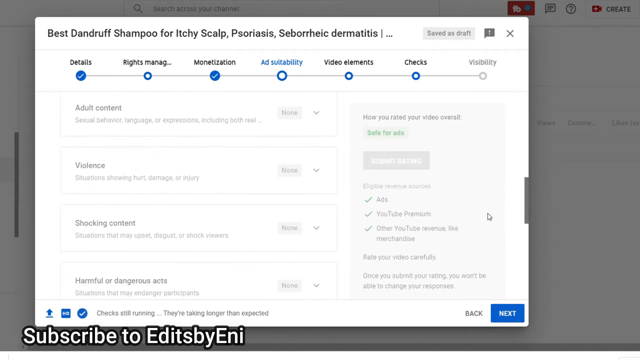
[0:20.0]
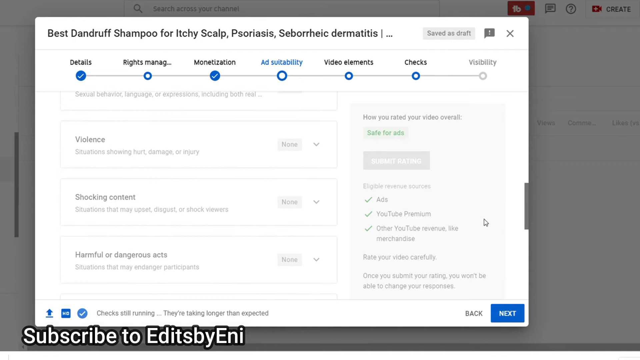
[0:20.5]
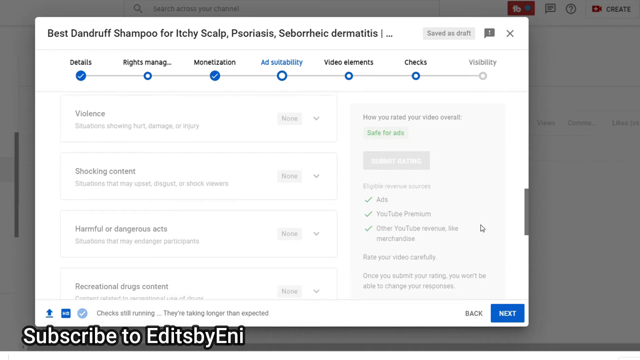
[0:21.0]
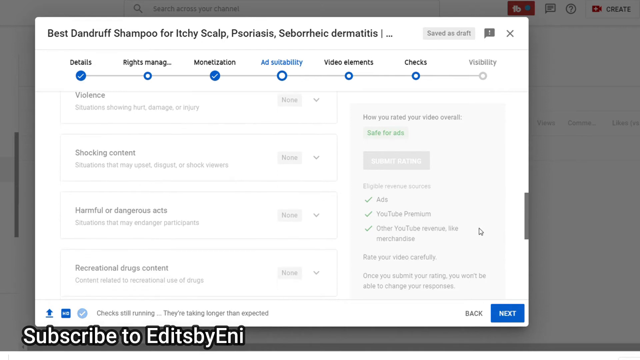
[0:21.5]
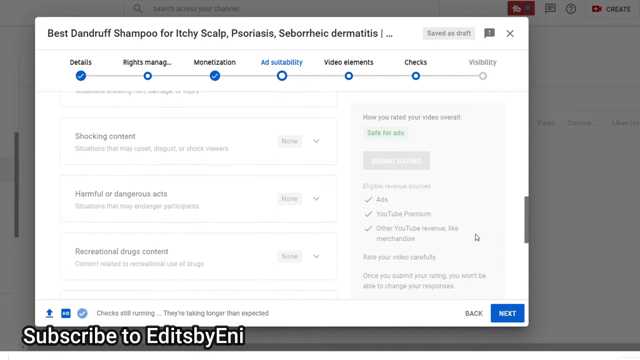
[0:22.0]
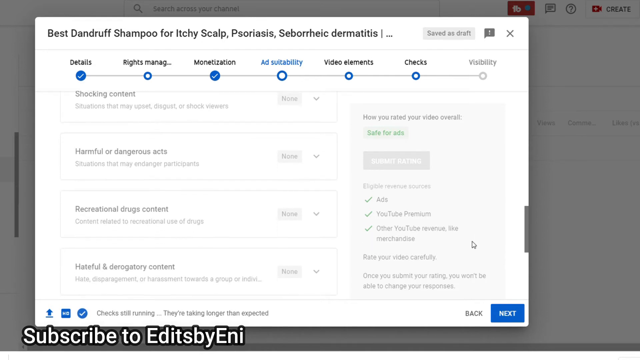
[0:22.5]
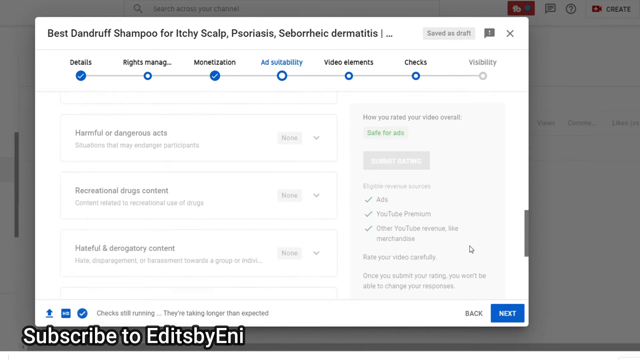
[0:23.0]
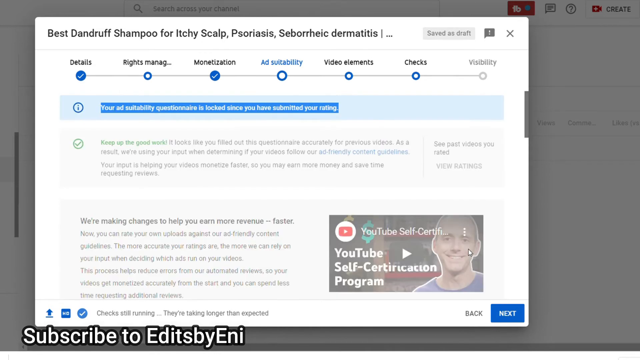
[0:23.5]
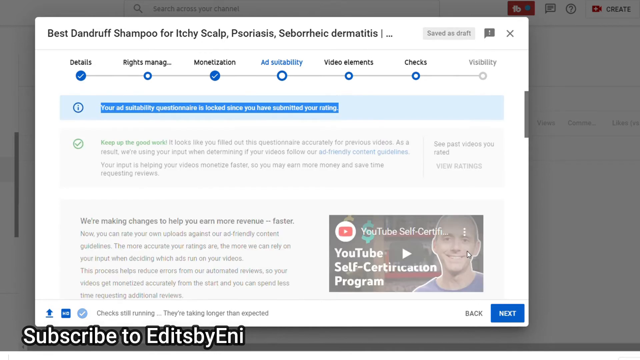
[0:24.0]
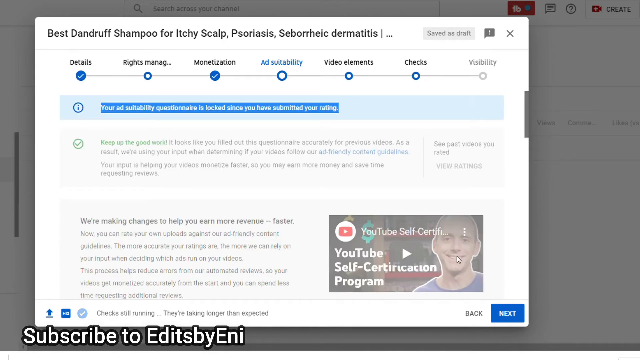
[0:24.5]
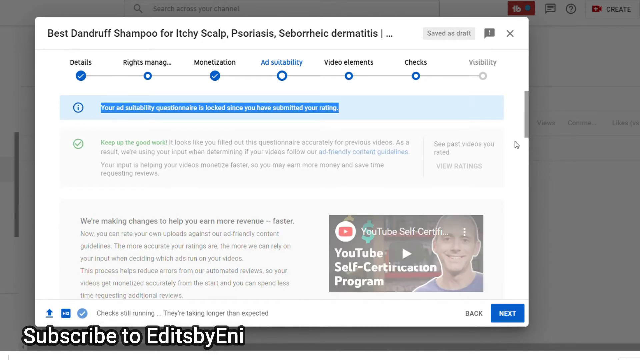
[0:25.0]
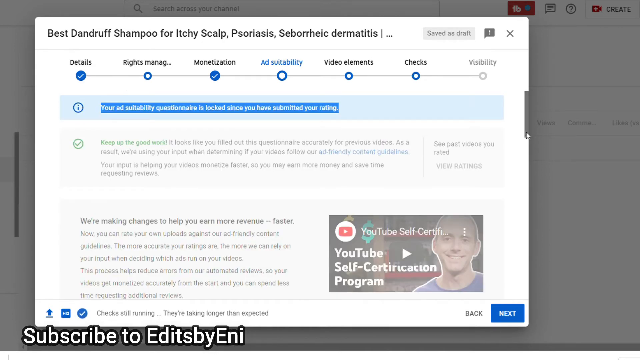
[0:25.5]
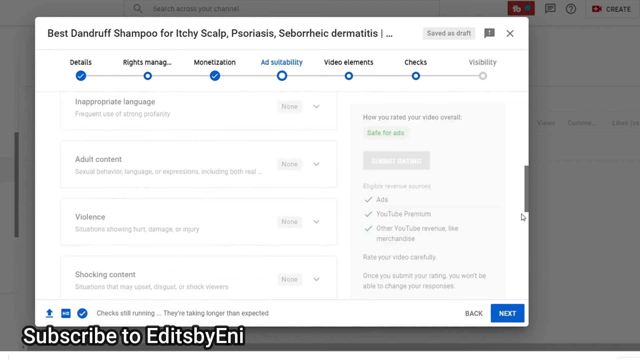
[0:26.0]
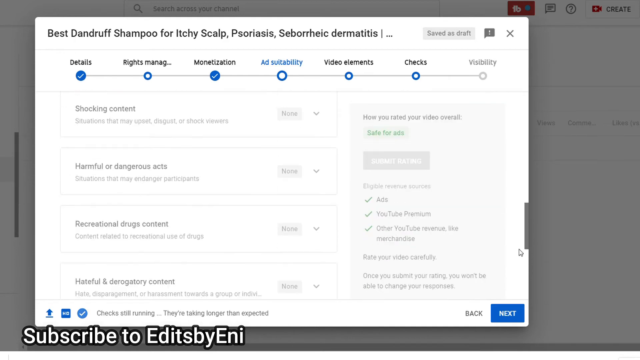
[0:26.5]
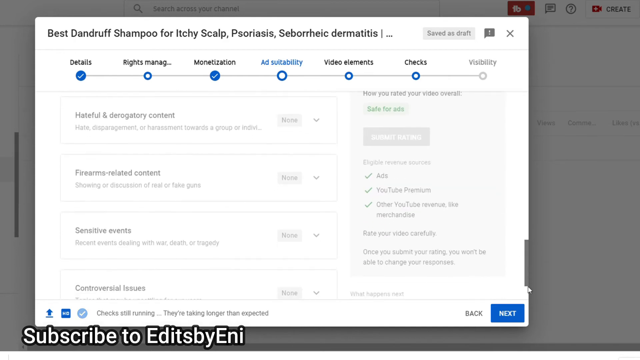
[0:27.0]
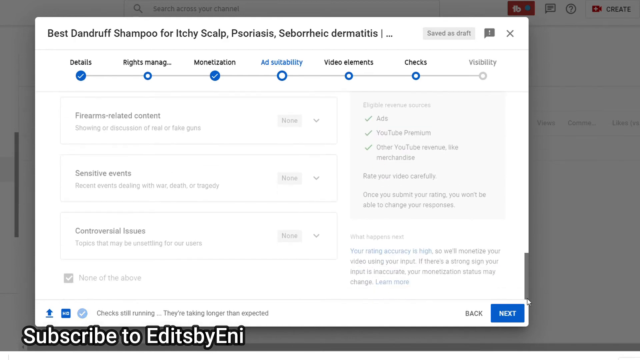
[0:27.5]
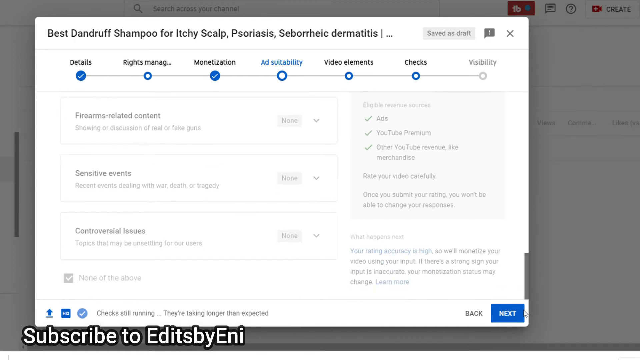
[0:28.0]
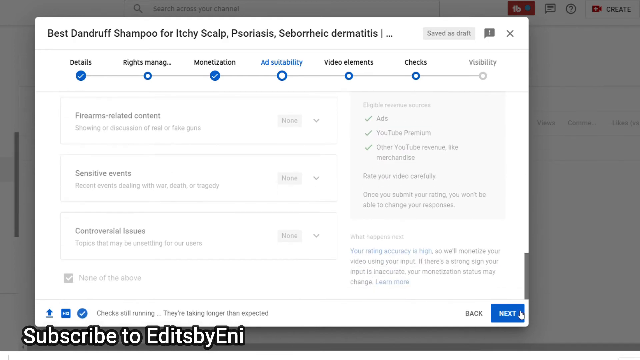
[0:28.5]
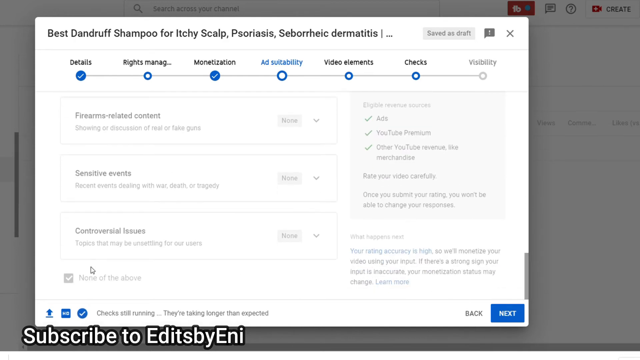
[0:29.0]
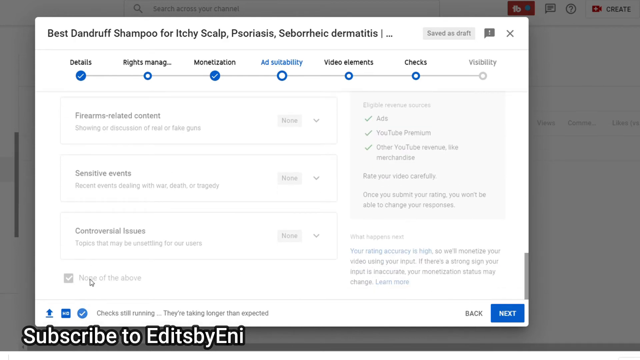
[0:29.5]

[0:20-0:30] A window shows the heading "best dandruff shampoo for itchy scalp, psoriasis etc." Below it is a horizontal timeline with blue check pointers for each topic, such as details, rights management, monetization and ad suitability. Ad suitability is selected, and information about it is shown below. The page is scrolled down with the mouse pointer, then suddenly returns to the top, where the text below the timeline is already selected, indicated by a blue highlight. "None of the above" checkboxes below the ad suitability contents on the left side are already ticked and grayed out. The mouse pointer moves left from the scroll bar to the "none of the above" checkbox and circles around it.